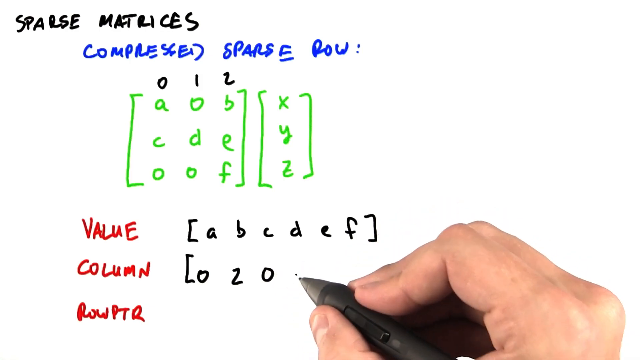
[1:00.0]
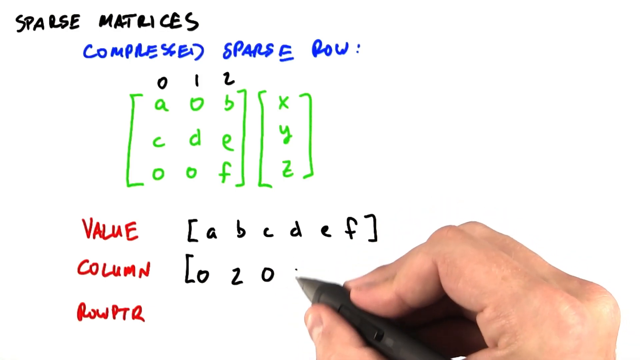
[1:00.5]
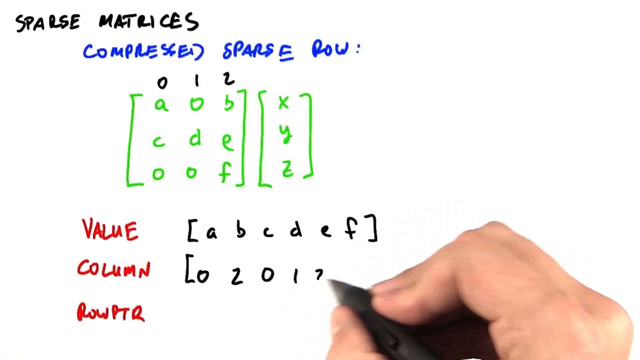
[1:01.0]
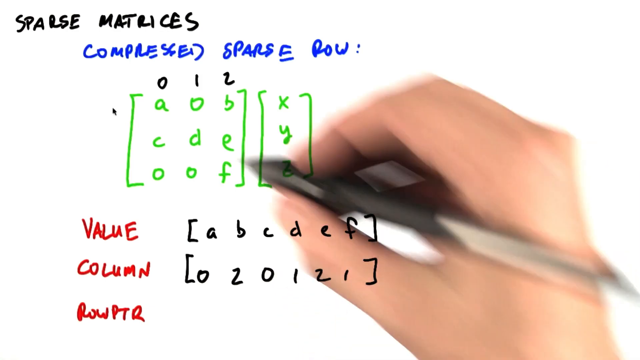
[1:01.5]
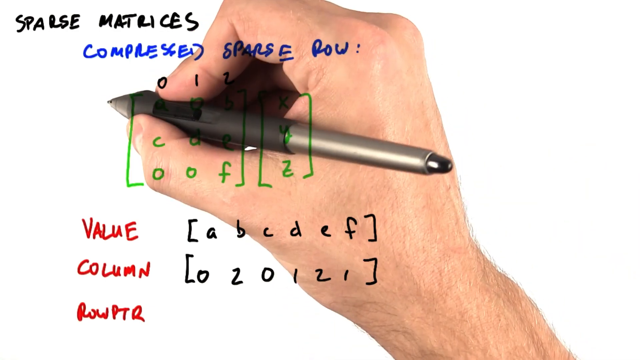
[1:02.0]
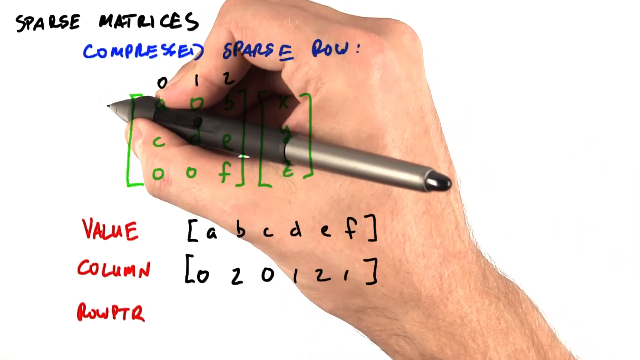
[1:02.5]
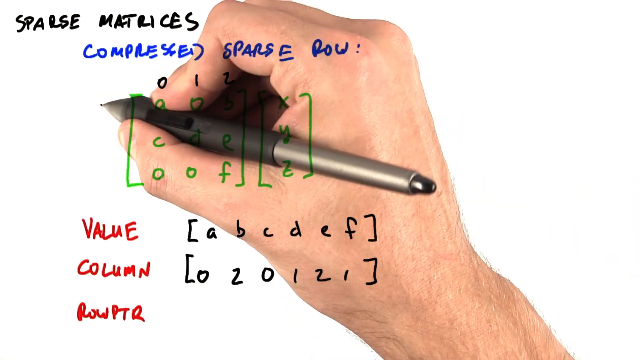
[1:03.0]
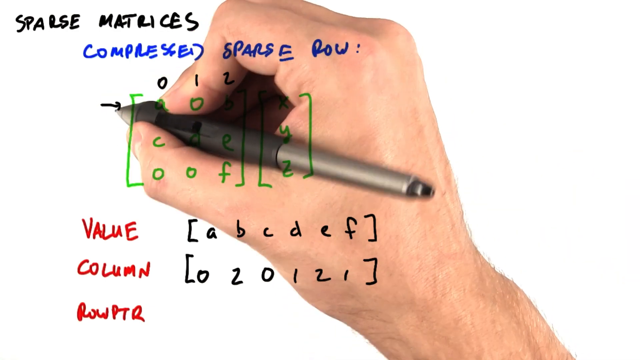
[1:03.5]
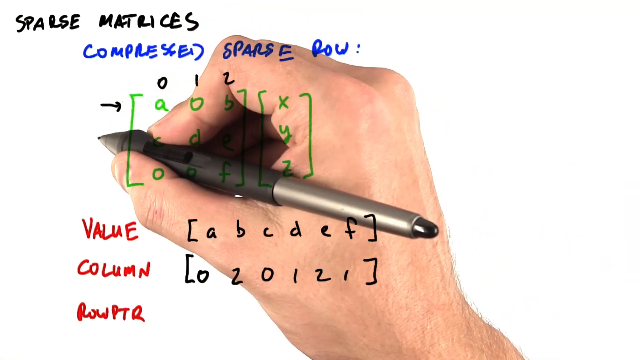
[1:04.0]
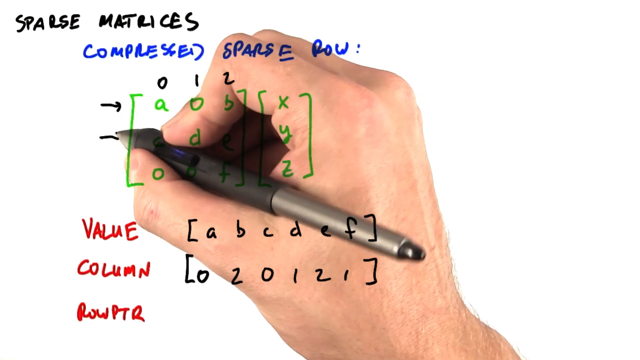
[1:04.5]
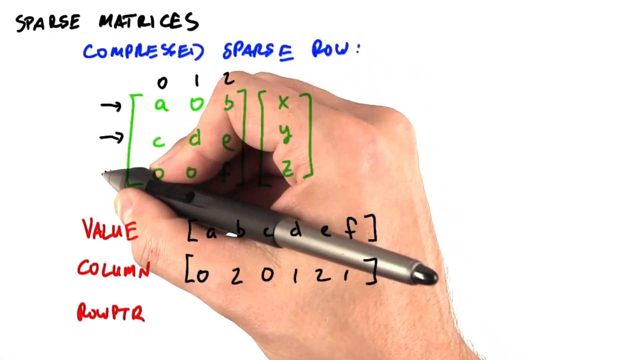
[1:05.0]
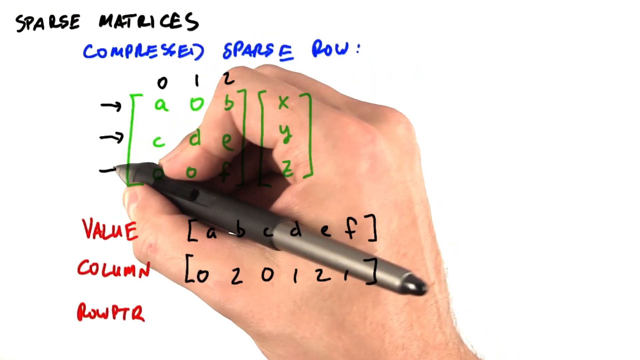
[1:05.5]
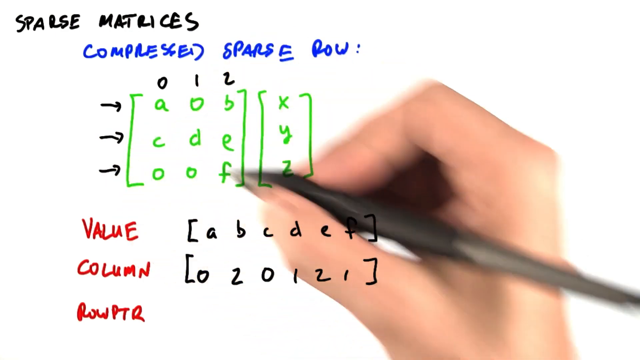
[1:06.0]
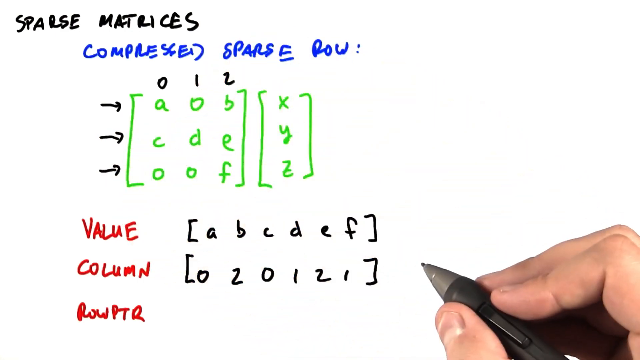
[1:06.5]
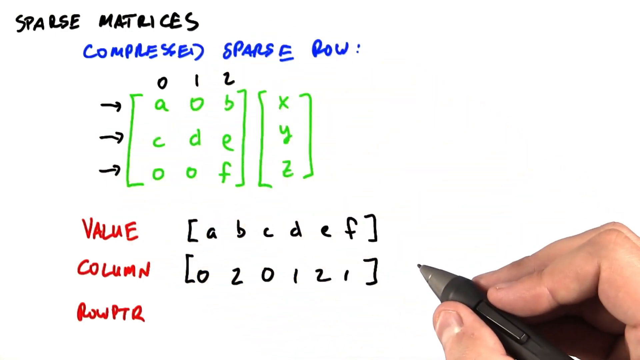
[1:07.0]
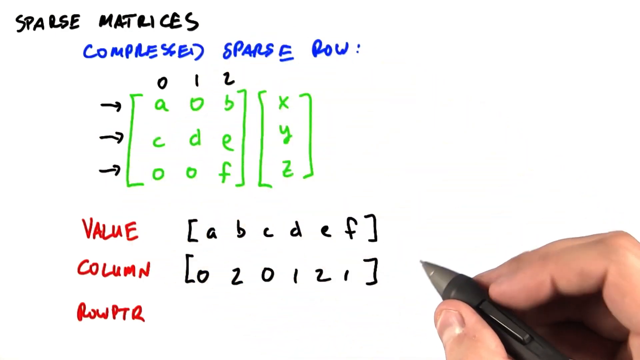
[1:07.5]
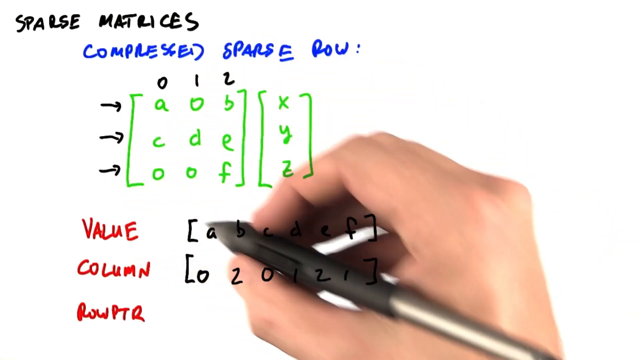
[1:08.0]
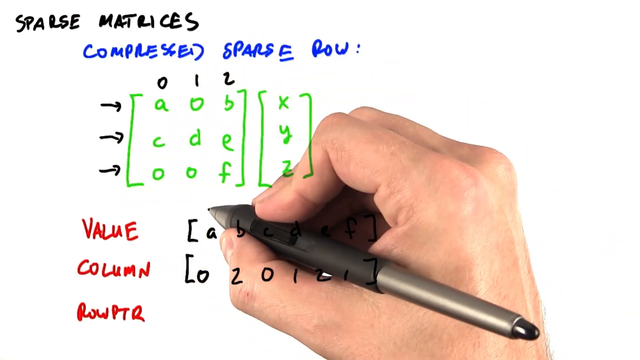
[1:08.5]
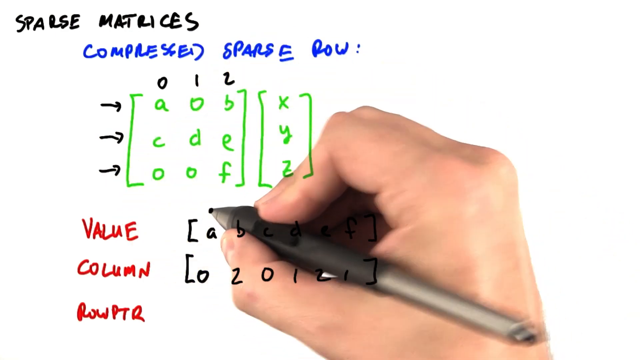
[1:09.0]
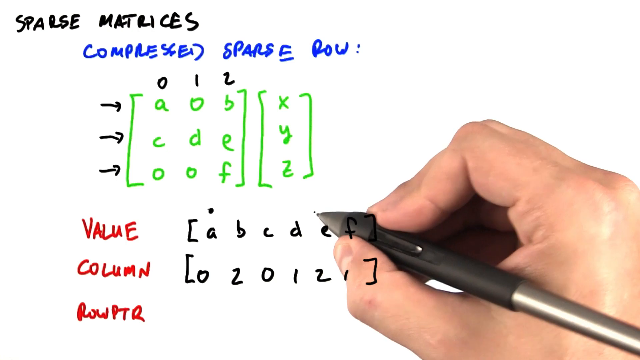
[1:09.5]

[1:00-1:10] The tutor continues answering the question. At column he has opened a square bracket and written 0 2 0. He goes up to the vectors and writes 0 on top of the first column, 1 on the second column and 2 on the third column. He goes back down to column, where the bracket is open, and writes the numbers 0 2 1 1 0 2 0 1 2 1. He then goes up again, draws an arrow on each row, and draws dots on A and C of the value.